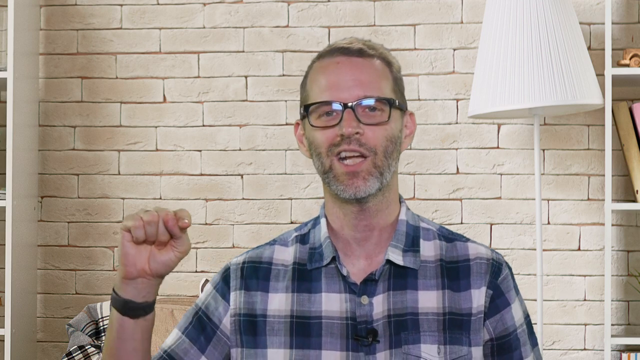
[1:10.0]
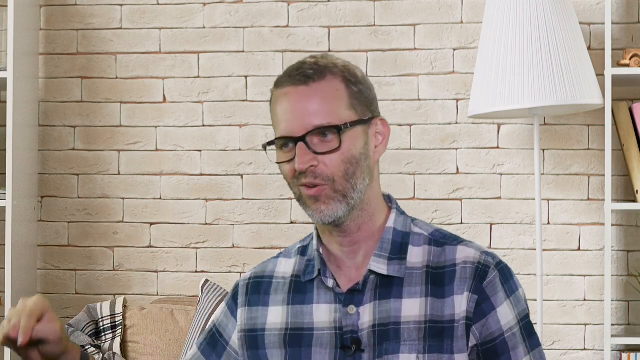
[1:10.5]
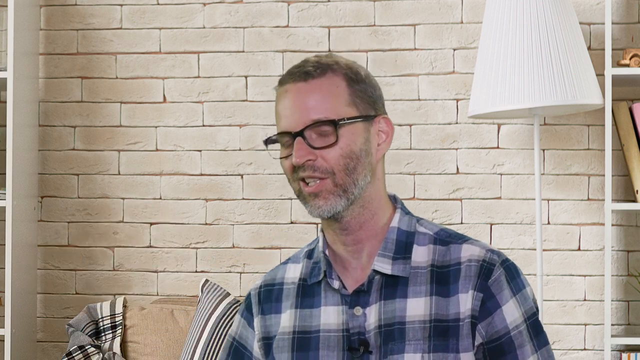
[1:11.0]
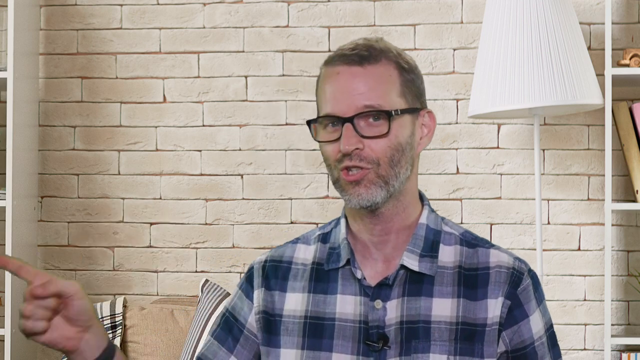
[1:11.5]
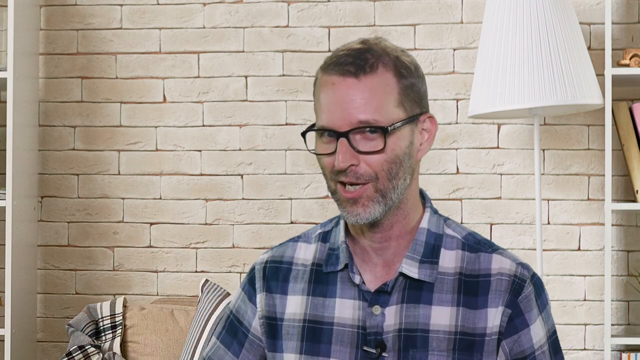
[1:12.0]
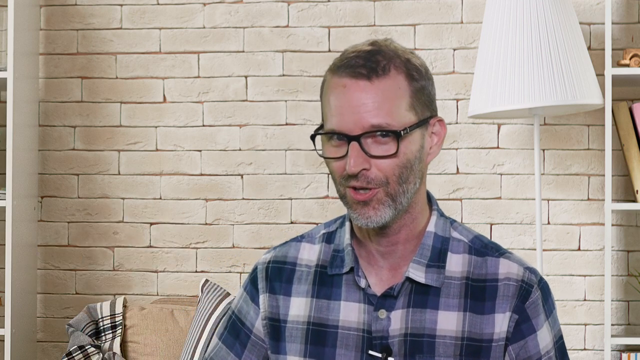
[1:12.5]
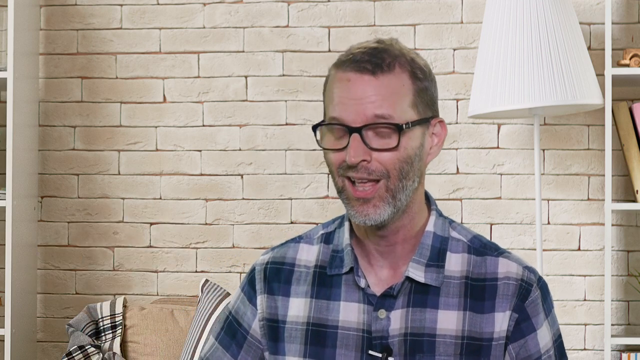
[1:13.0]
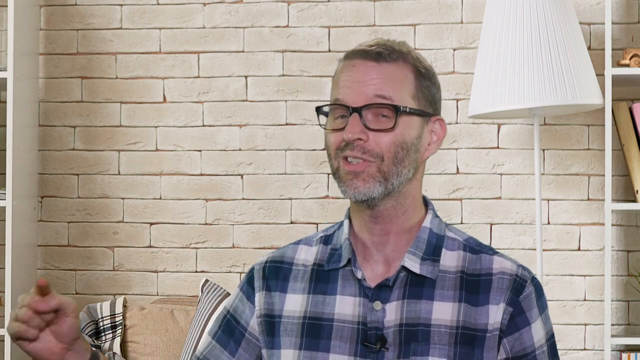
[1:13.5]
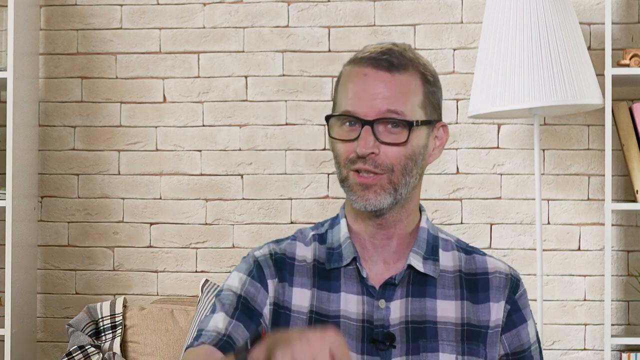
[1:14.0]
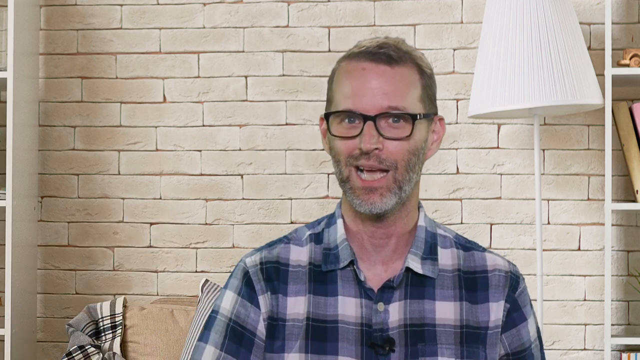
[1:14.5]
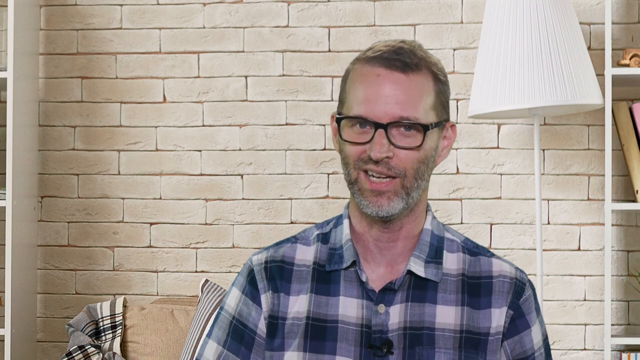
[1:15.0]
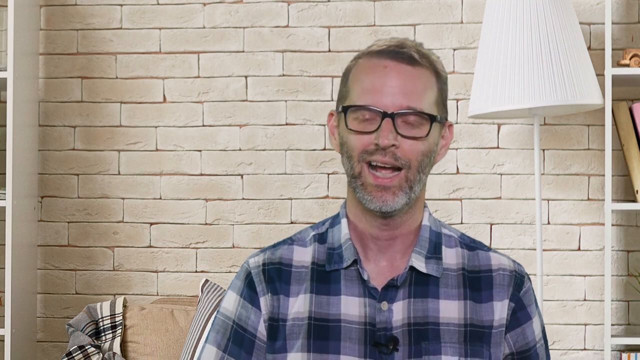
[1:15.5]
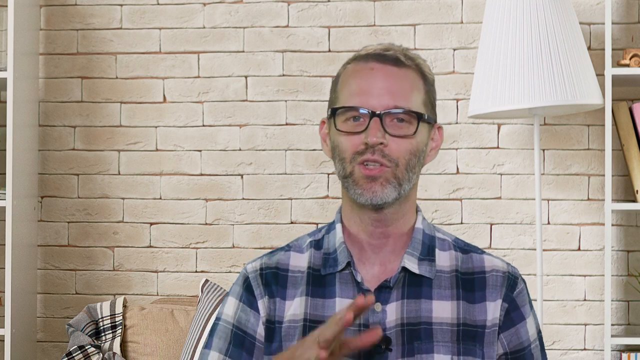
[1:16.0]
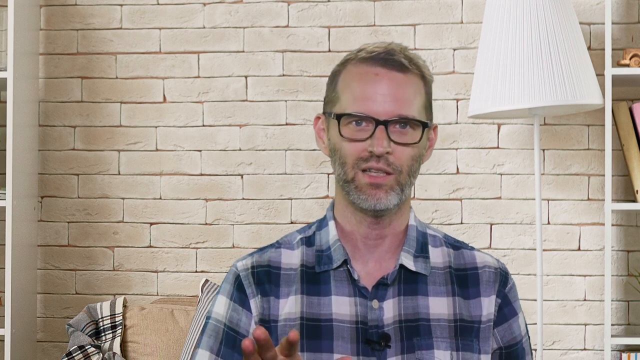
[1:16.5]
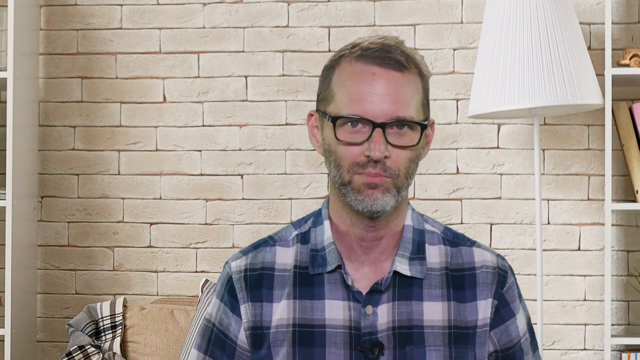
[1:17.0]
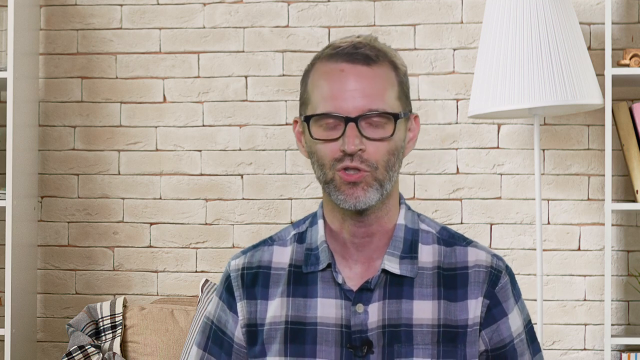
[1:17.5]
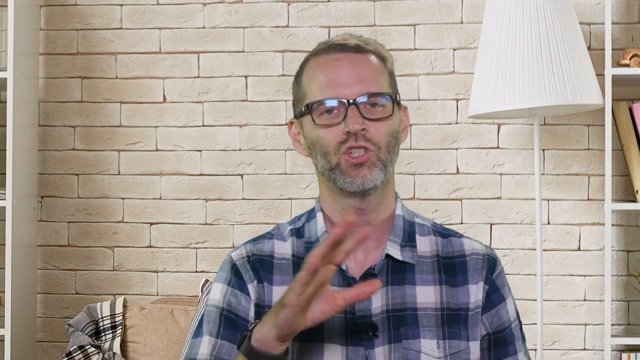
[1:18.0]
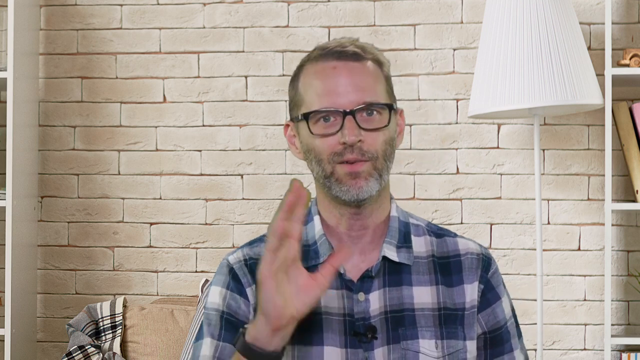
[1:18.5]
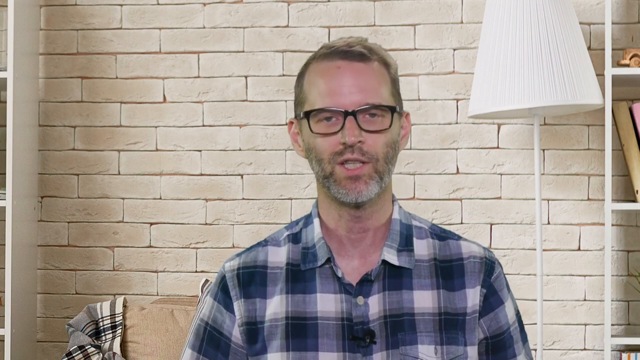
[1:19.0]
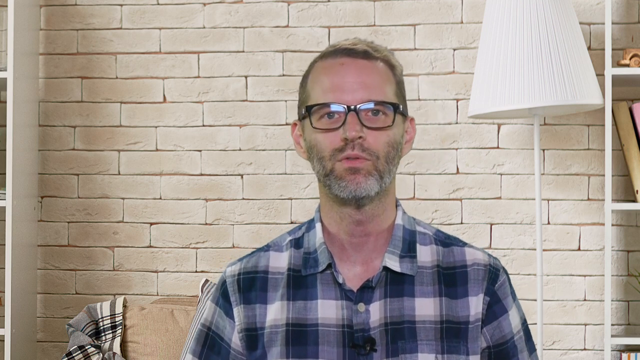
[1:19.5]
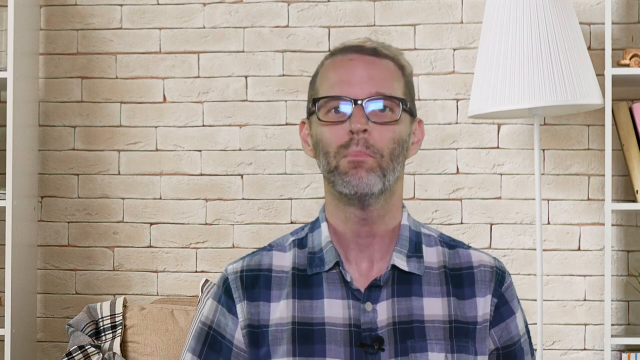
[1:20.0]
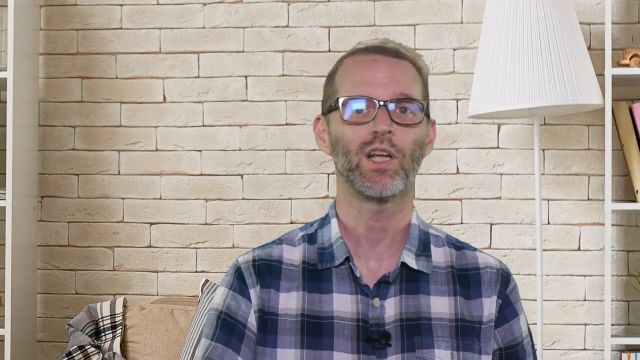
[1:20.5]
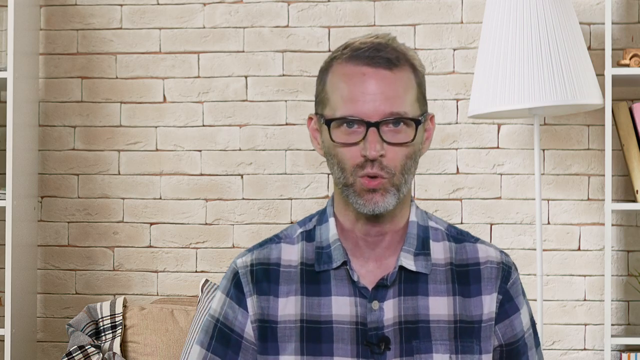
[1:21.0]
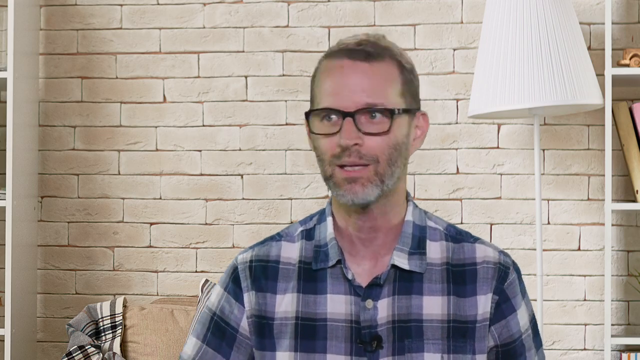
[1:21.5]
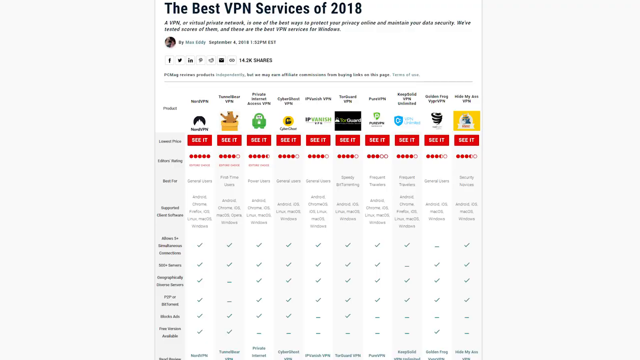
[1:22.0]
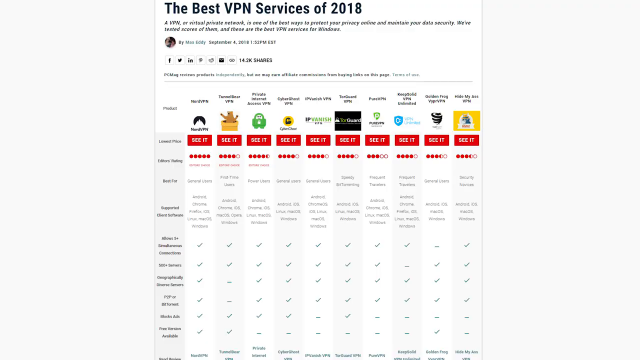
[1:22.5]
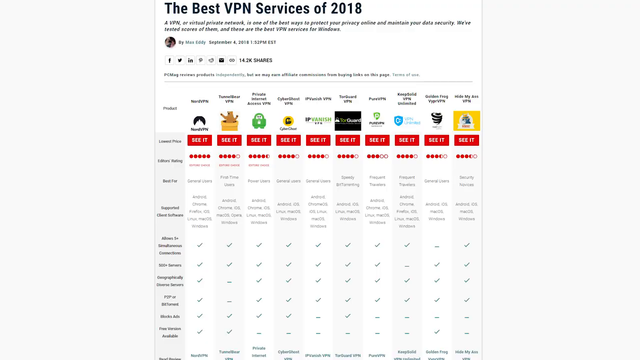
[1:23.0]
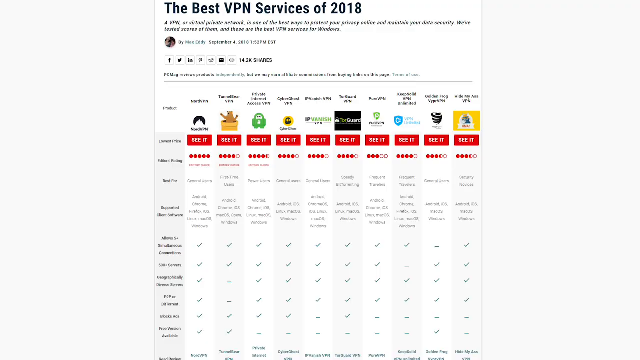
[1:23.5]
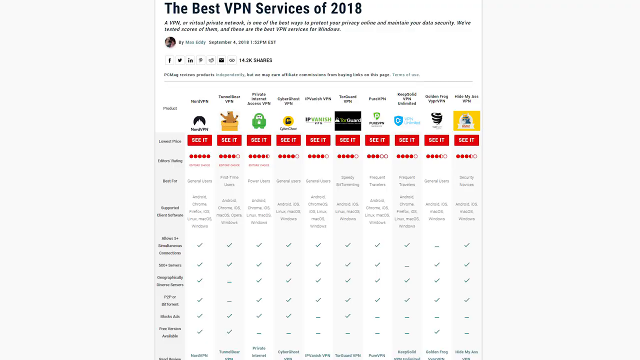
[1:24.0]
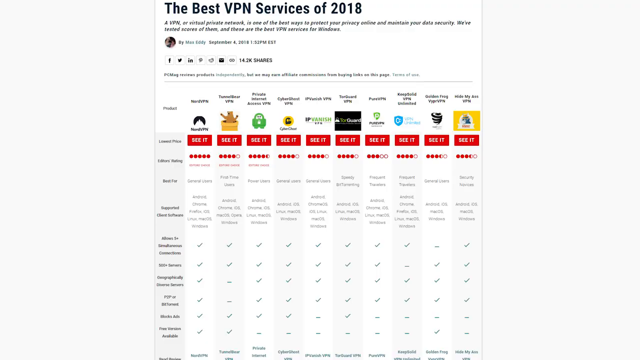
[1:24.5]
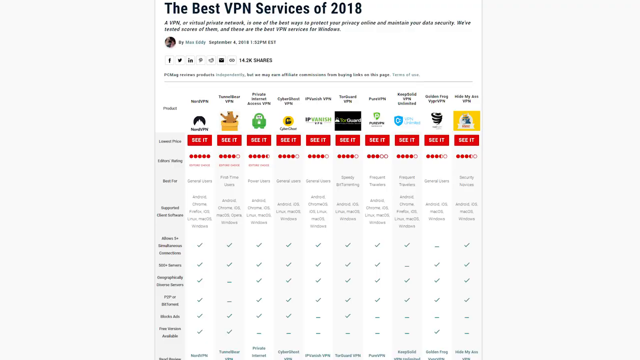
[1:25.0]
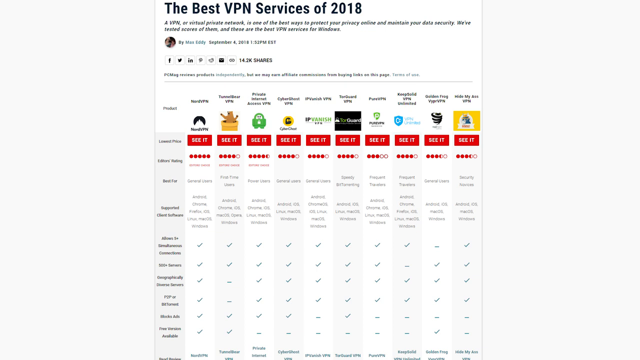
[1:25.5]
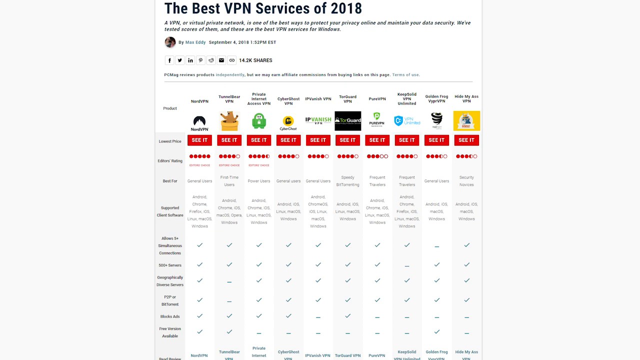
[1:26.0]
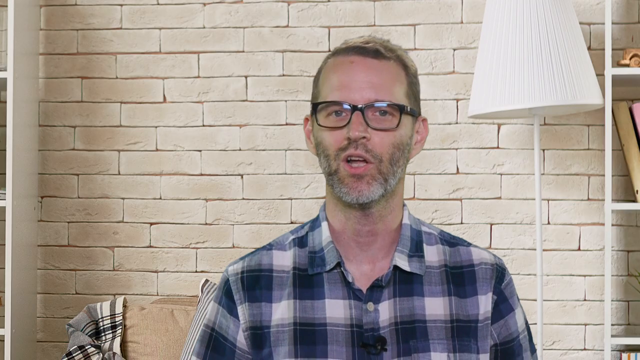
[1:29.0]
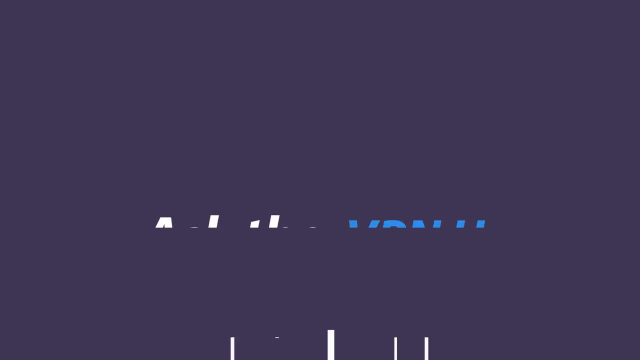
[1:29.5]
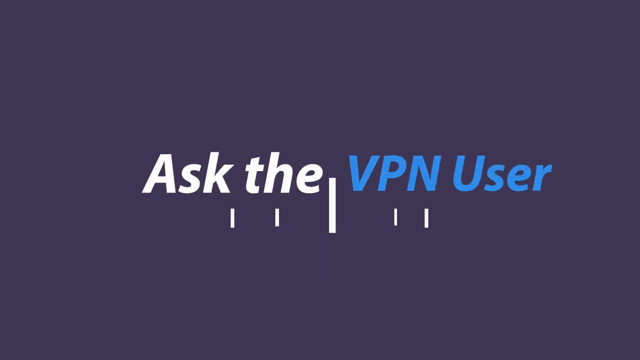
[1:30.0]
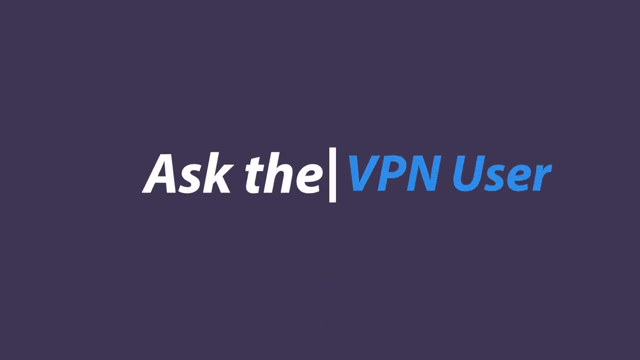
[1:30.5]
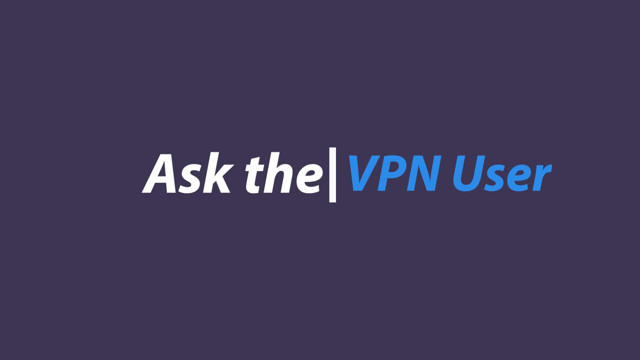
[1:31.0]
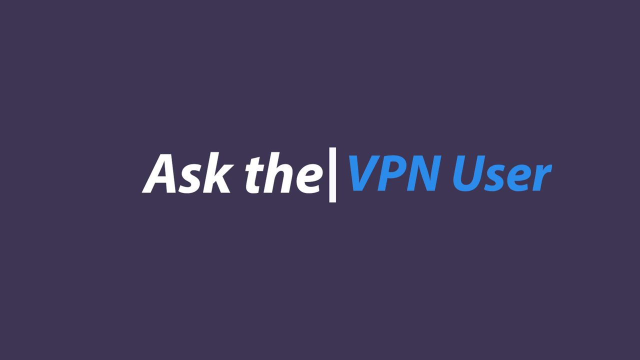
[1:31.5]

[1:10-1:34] The man speaks, makes a small circular motion and kind of crouches down slightly with a funny look. He is rotated a bit toward his right, looking at the camera mostly from his left side. He makes a hand motion to emphasize his point, continues talking, and looks to the front. Another diagram is shown that looks like a screenshot of a social media service, with a table listing a number of VPN services, apparently numbered one through ten, with kind of the benefits and cost of each. It then cuts back to text that says "ask the VPN user", where "ask" is separated by a vertical line; "VPN user" is in blue and "ask" is in white. The video kind of ends there.